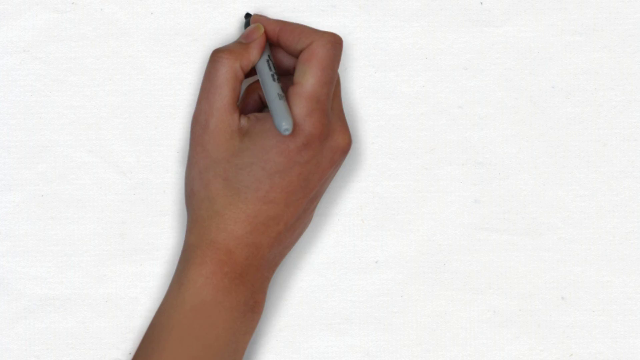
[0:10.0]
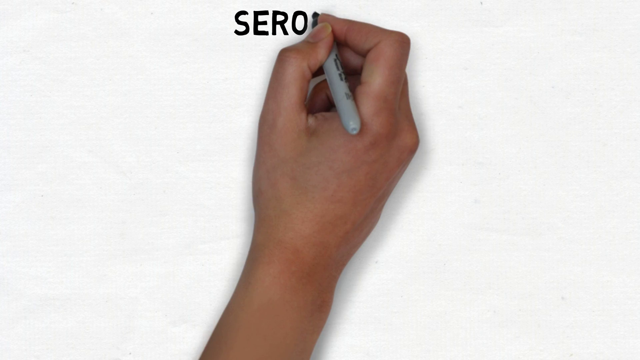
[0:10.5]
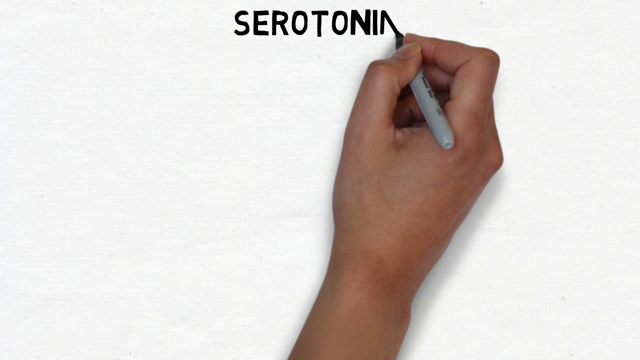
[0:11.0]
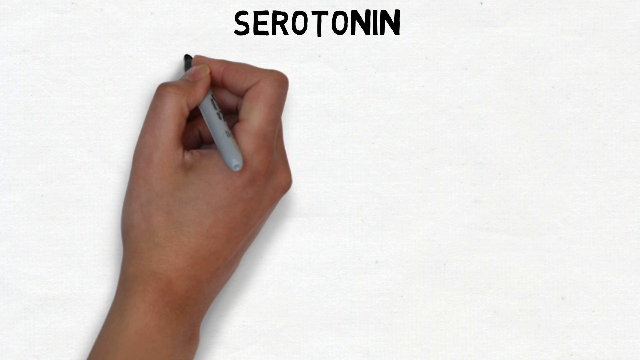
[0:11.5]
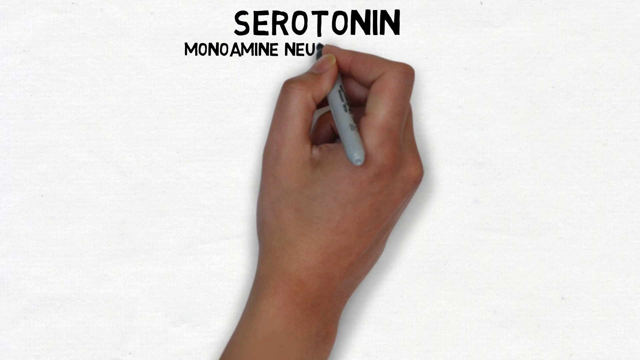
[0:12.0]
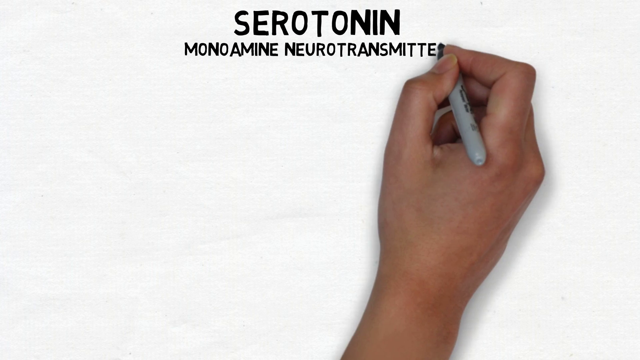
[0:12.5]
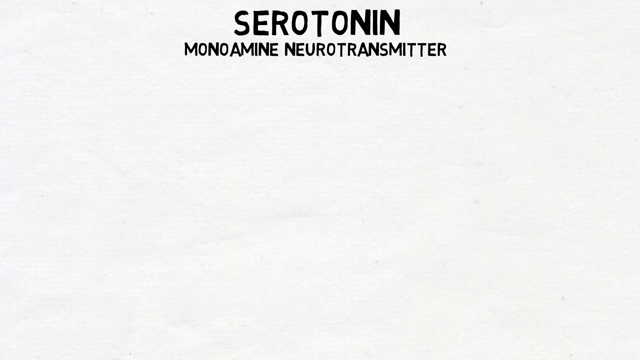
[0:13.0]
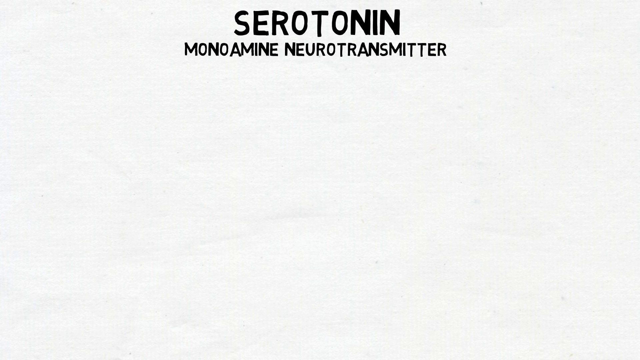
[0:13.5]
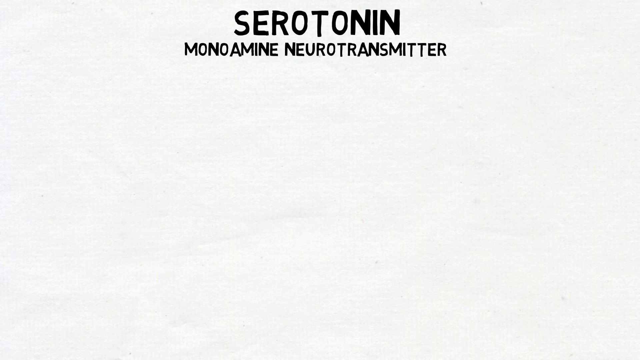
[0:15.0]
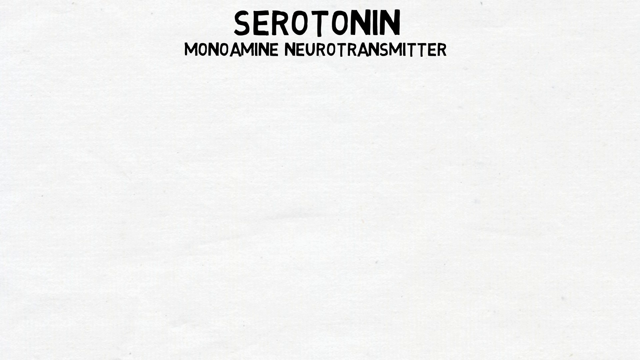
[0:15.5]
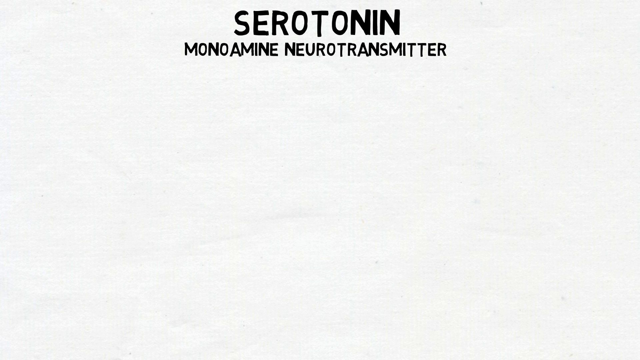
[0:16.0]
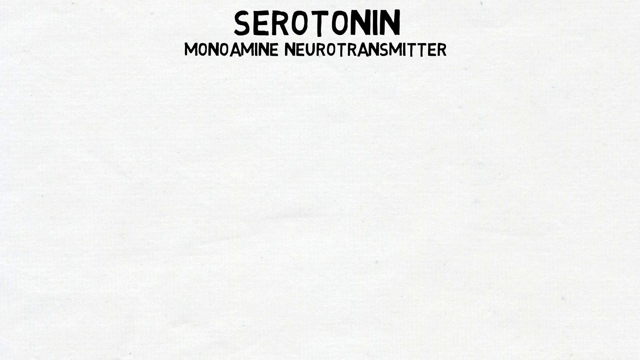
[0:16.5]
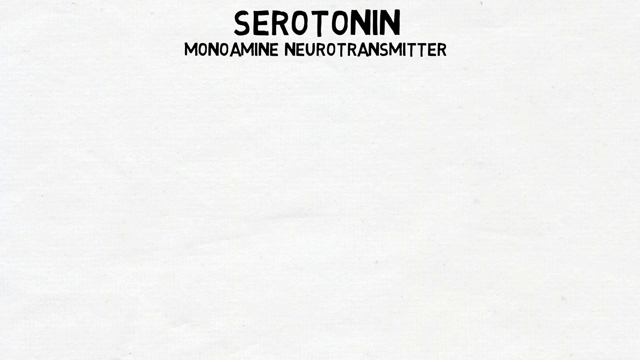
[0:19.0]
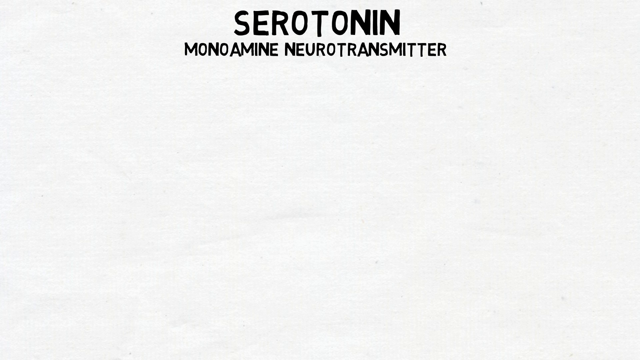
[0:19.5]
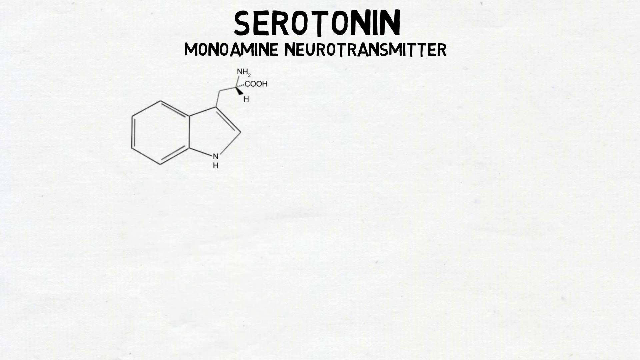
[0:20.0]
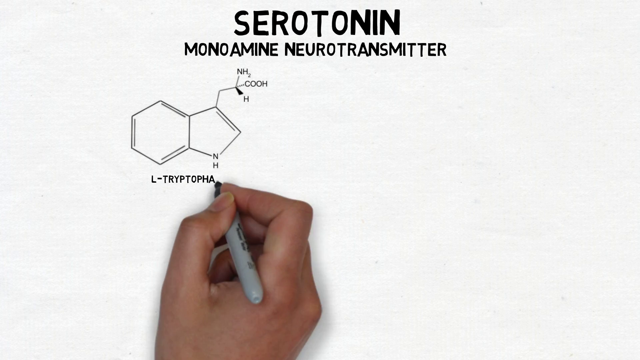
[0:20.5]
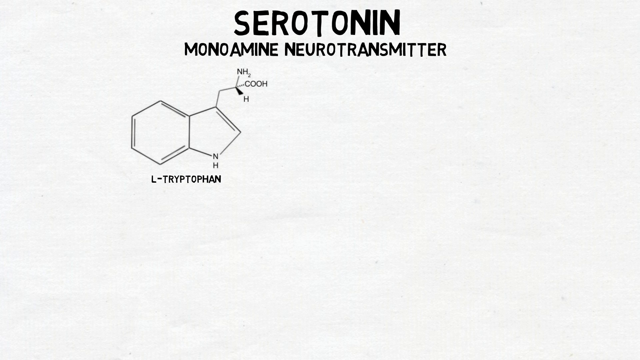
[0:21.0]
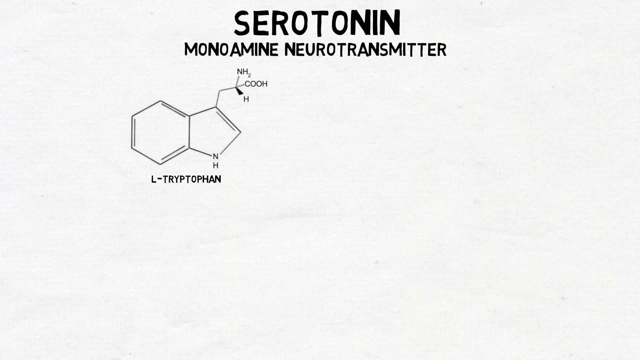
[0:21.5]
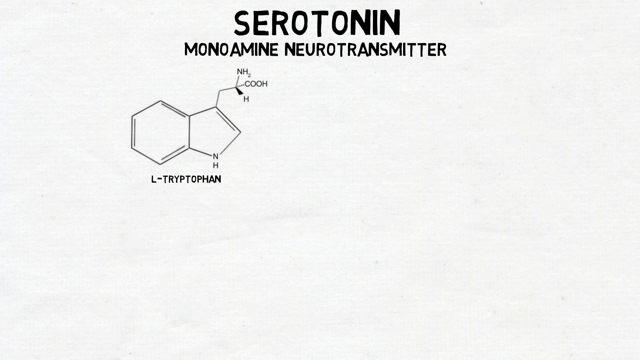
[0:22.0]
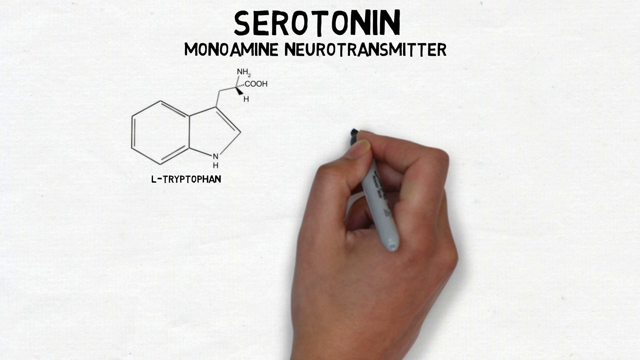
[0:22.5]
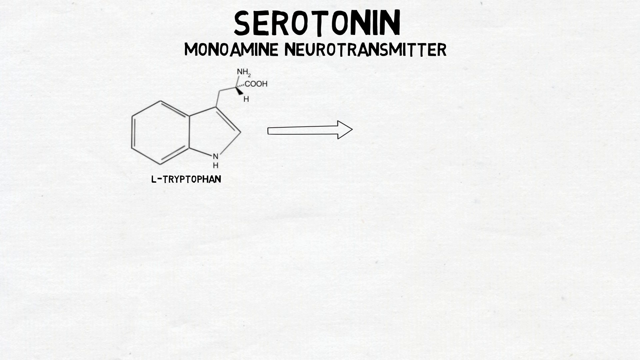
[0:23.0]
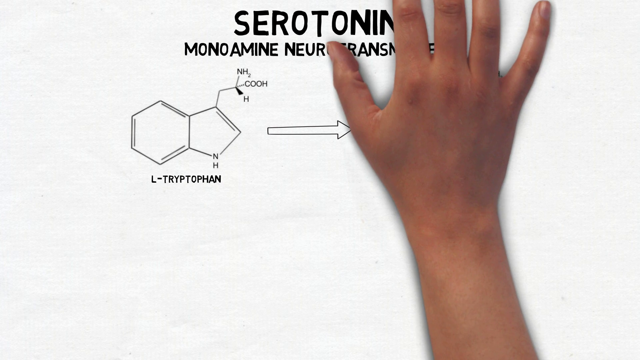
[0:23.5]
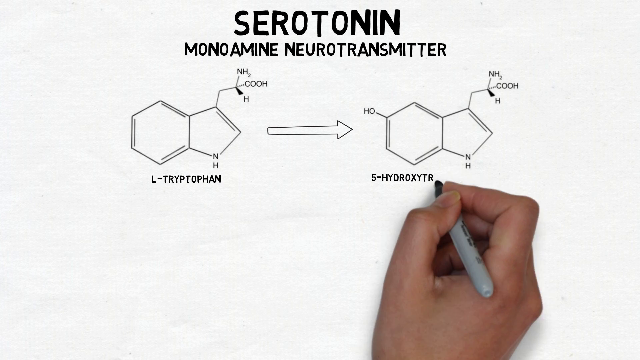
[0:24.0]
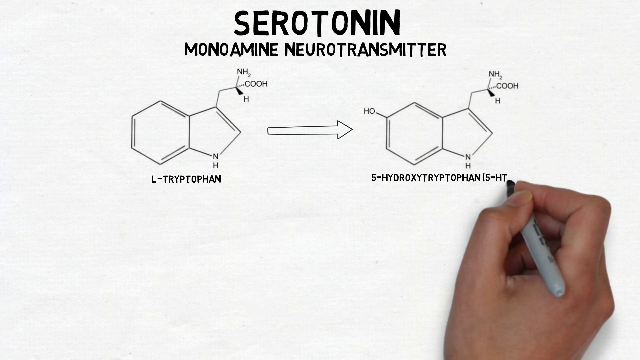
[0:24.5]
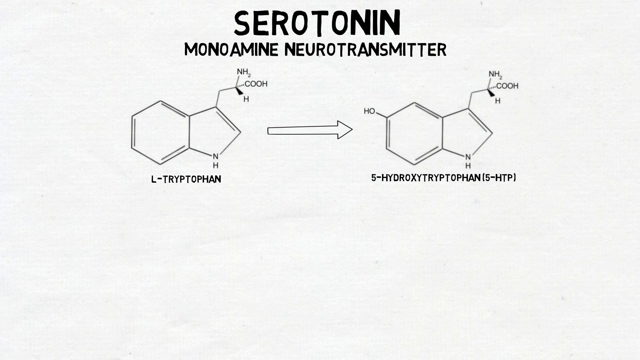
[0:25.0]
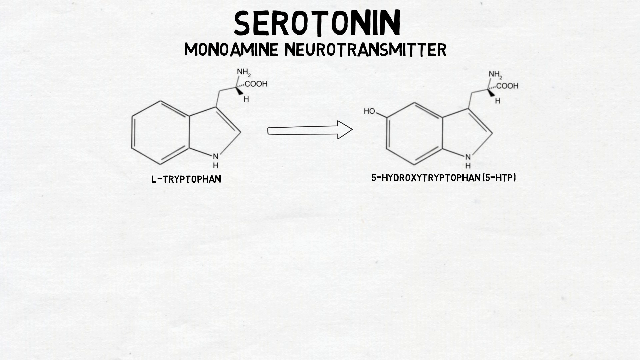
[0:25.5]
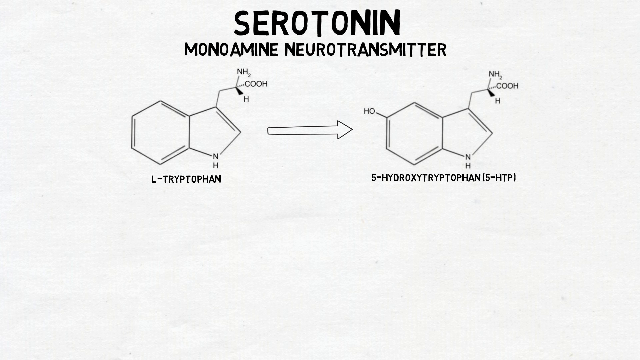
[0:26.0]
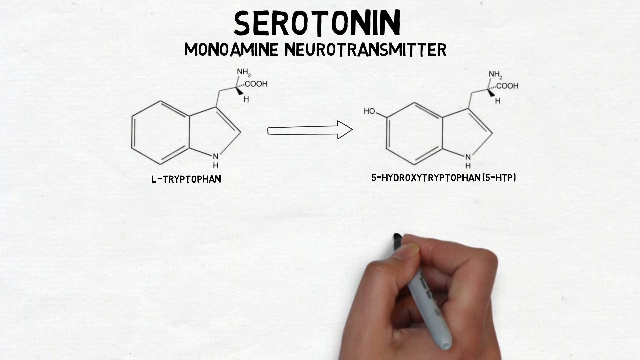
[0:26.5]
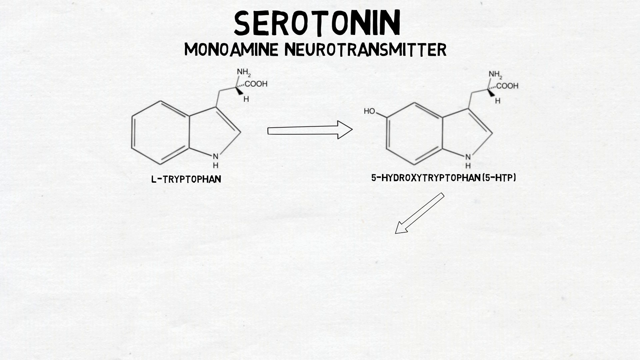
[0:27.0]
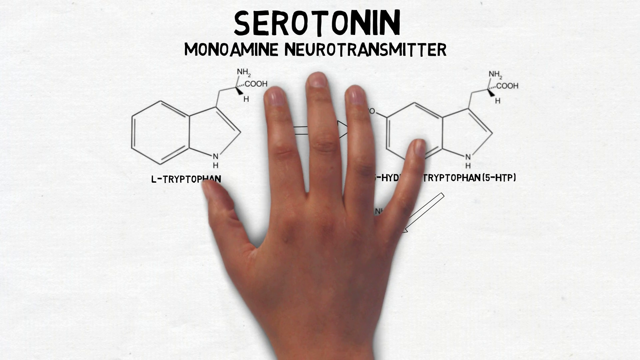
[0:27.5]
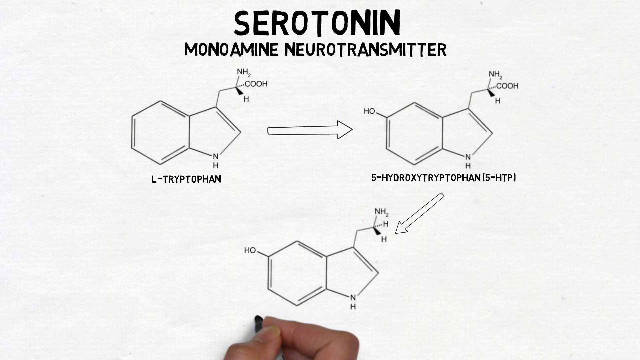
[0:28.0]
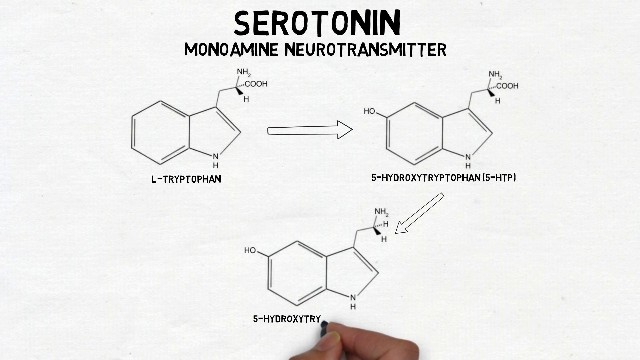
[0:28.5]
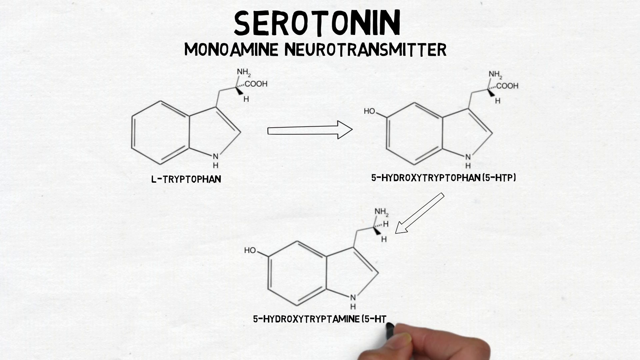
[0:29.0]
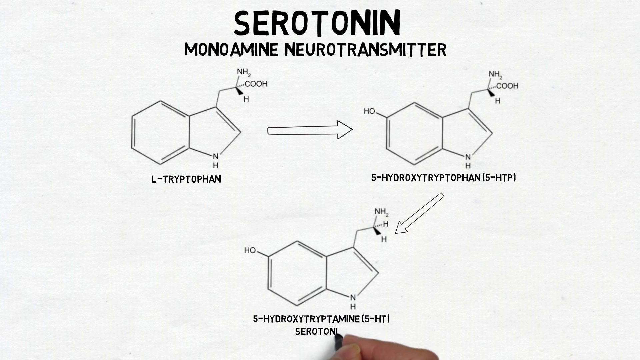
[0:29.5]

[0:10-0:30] On a white screen, a person's hand and wrist are visible, holding a gray marker with a black tip in their right hand. At the very top of the screen they write the word "serotonin," and underneath it "monoamine neurotransmitter." They then draw a small design that looks like two octagon shapes stuck together and write "L-Tryptophan" underneath it. A line comes up off one of the octagon shapes, and at its tip they write "N-H-C-O-O-H-N-H." The hand draws an arrow pointing to the right, and to the right of the arrow draws another design of two octagon shapes stuck together. Underneath it the hand writes in black "5-hydroxytryptophan," and beside that, in parentheses, "5-HTP."